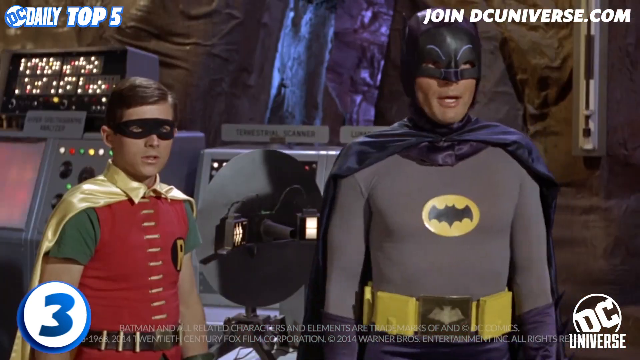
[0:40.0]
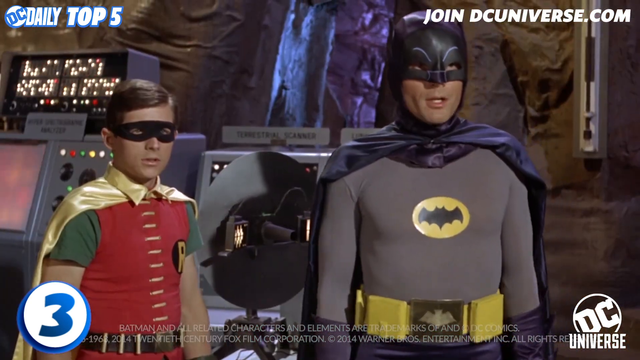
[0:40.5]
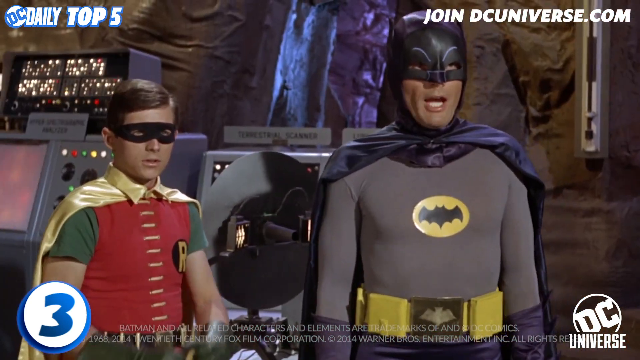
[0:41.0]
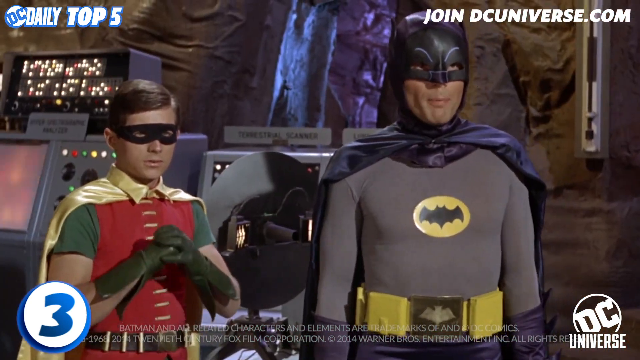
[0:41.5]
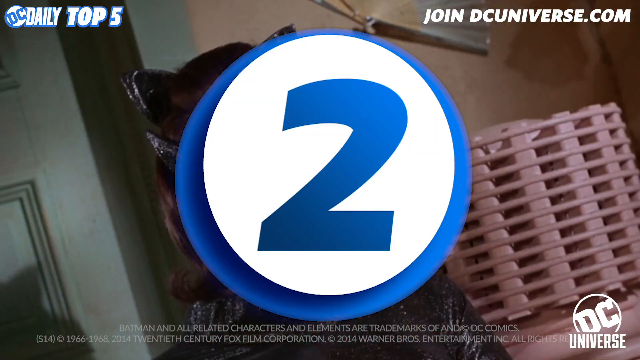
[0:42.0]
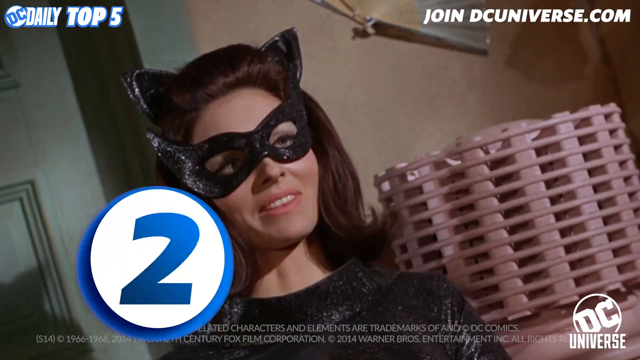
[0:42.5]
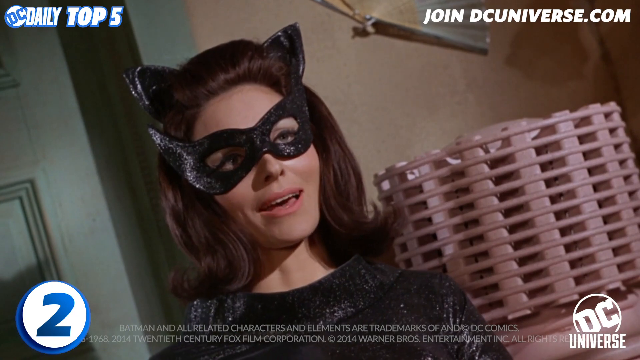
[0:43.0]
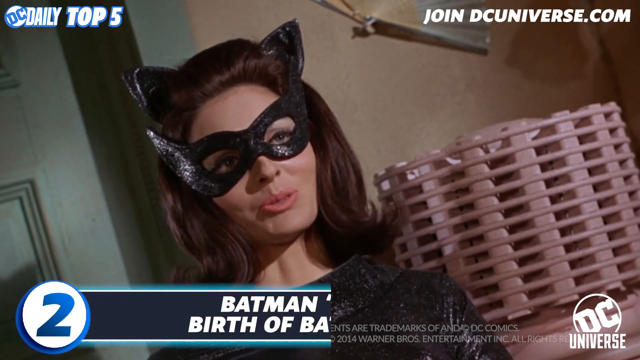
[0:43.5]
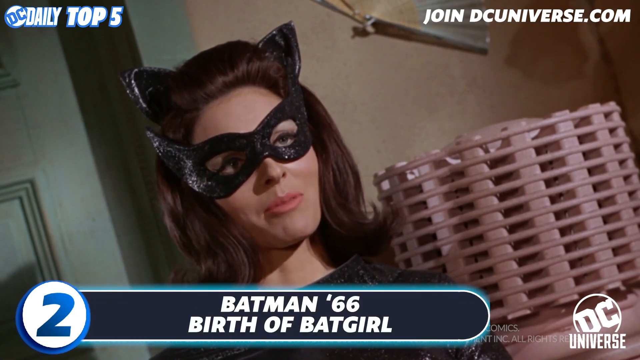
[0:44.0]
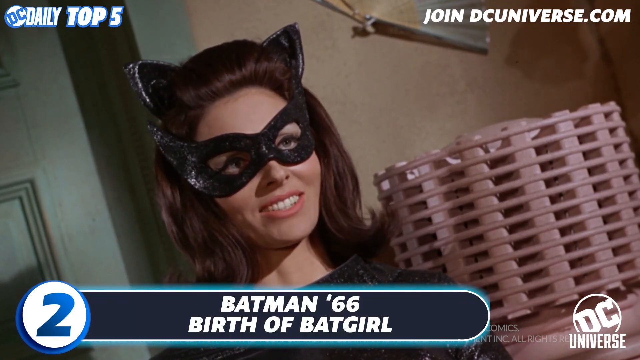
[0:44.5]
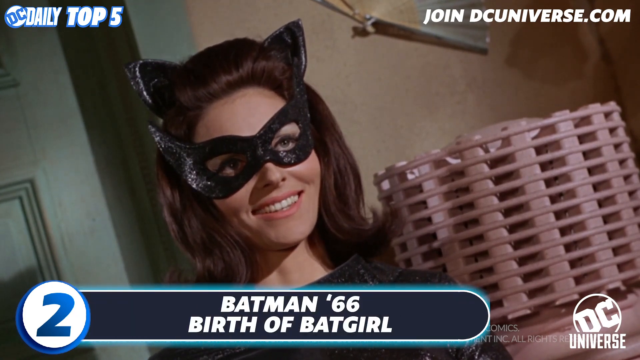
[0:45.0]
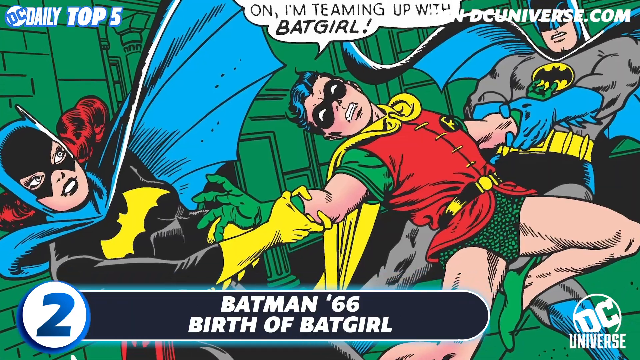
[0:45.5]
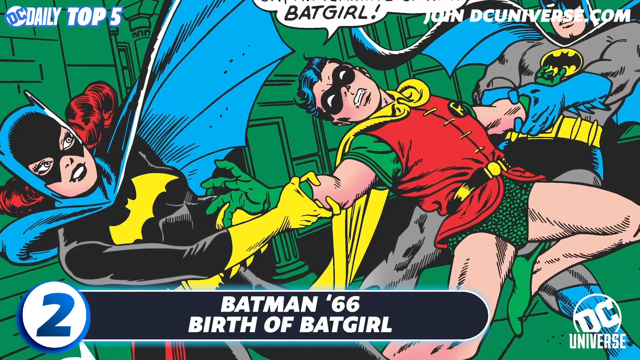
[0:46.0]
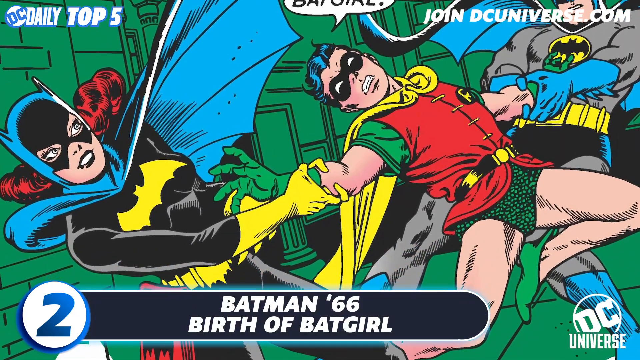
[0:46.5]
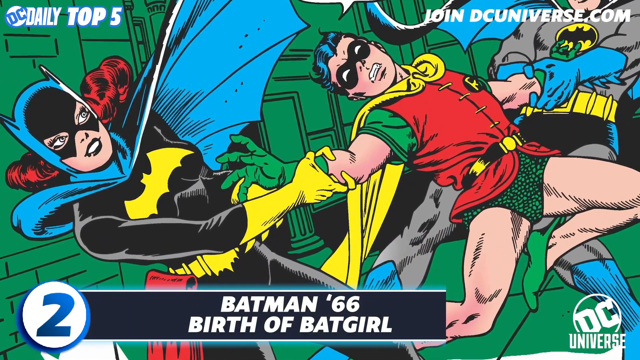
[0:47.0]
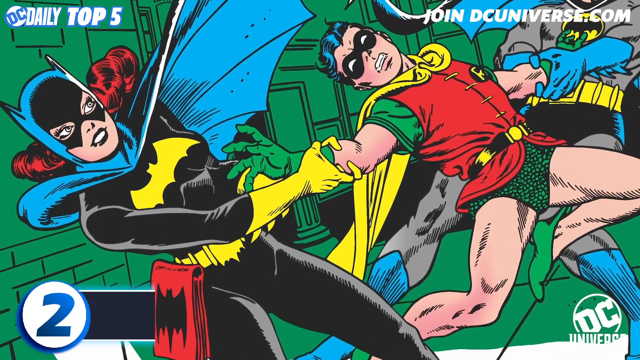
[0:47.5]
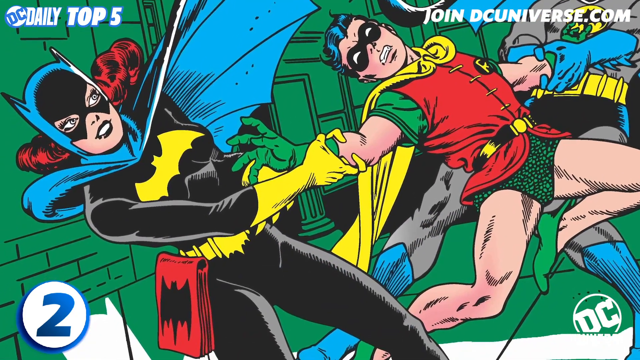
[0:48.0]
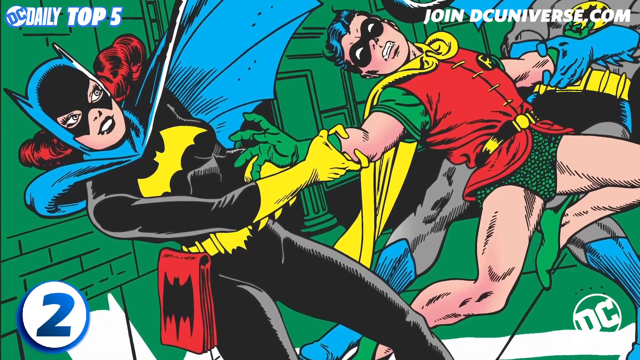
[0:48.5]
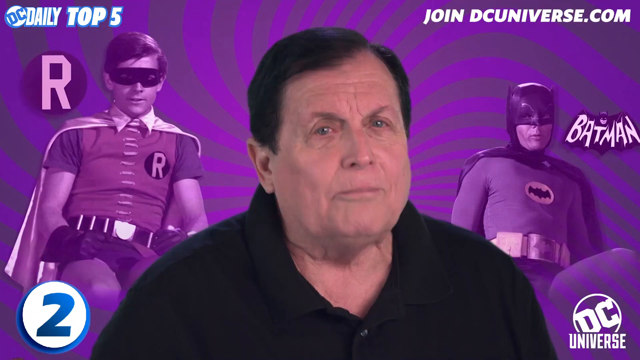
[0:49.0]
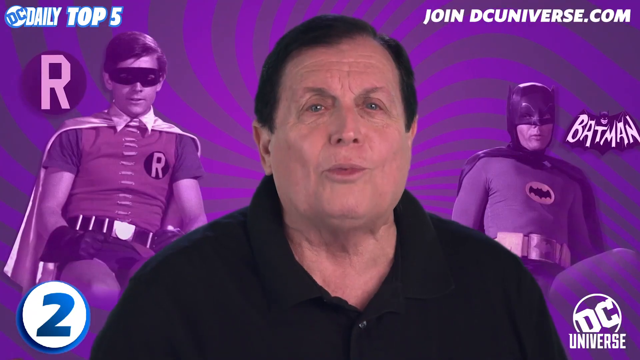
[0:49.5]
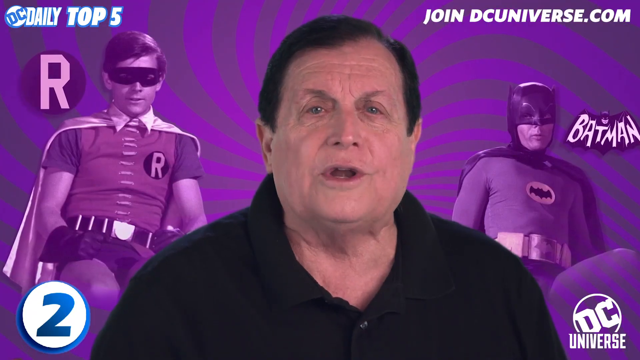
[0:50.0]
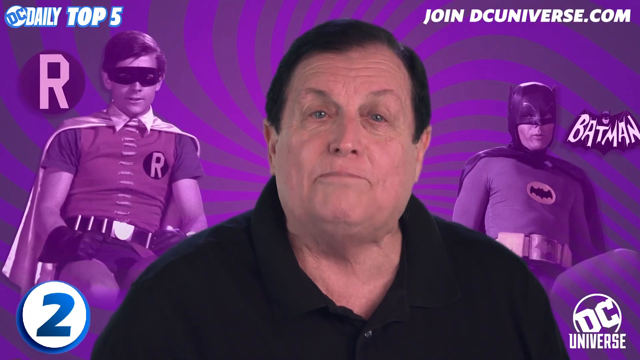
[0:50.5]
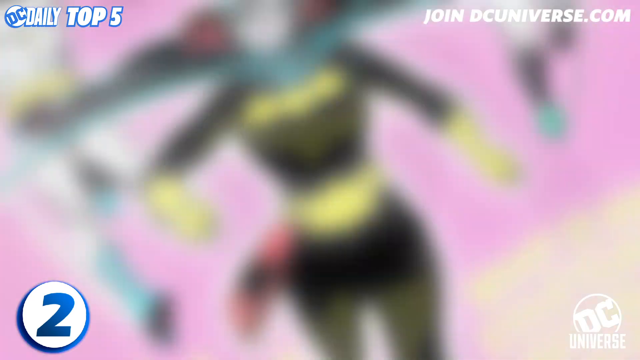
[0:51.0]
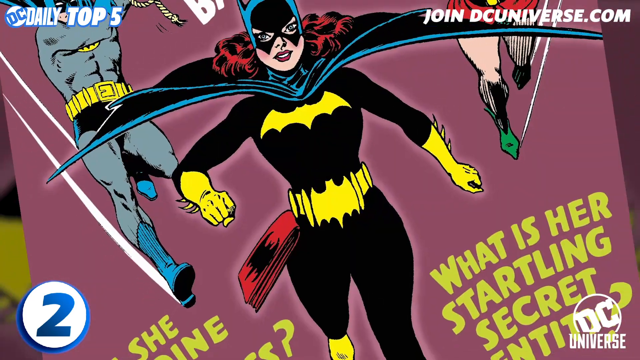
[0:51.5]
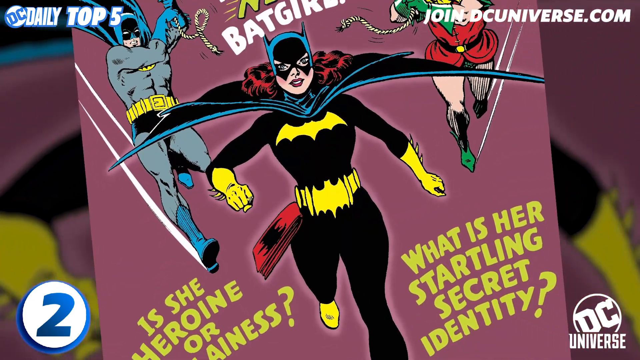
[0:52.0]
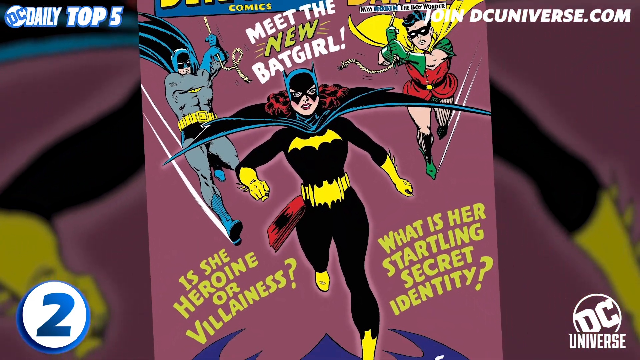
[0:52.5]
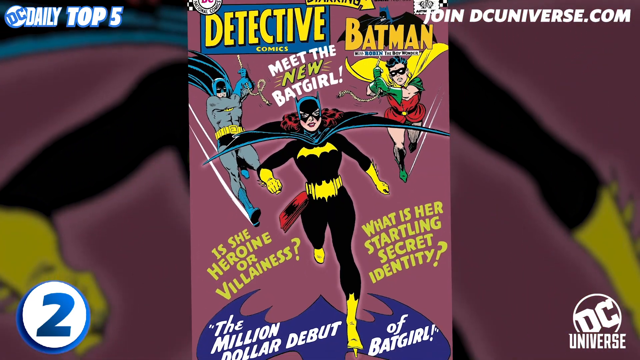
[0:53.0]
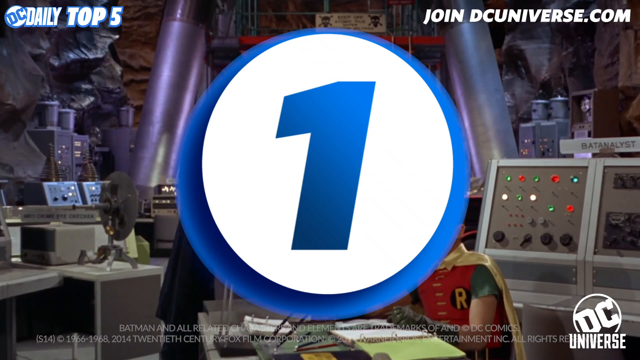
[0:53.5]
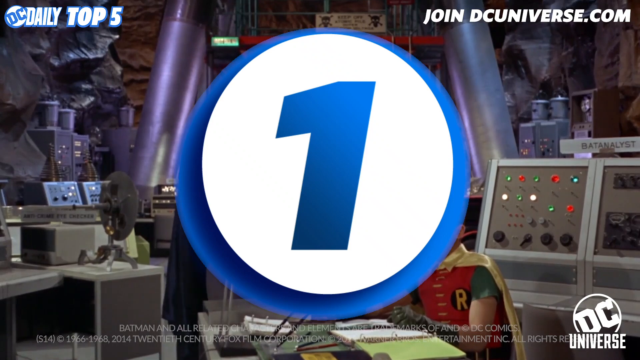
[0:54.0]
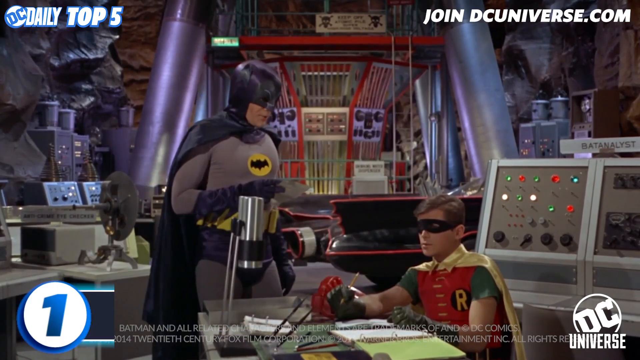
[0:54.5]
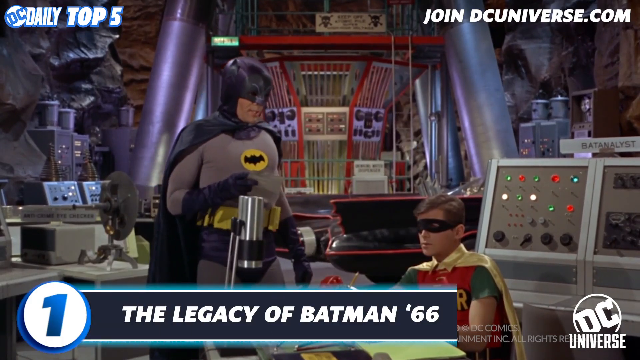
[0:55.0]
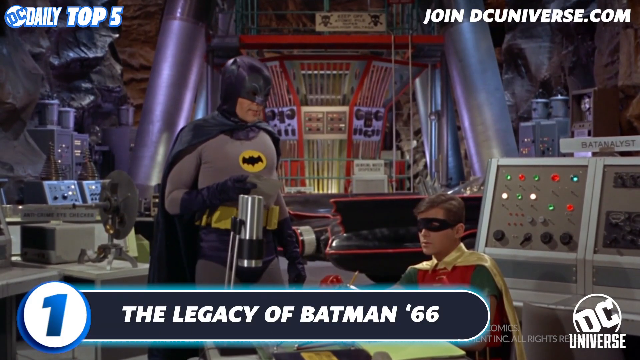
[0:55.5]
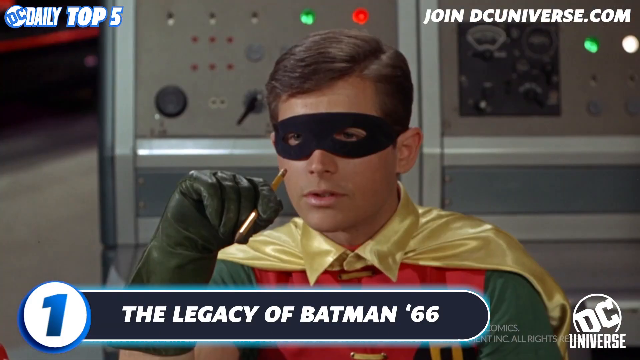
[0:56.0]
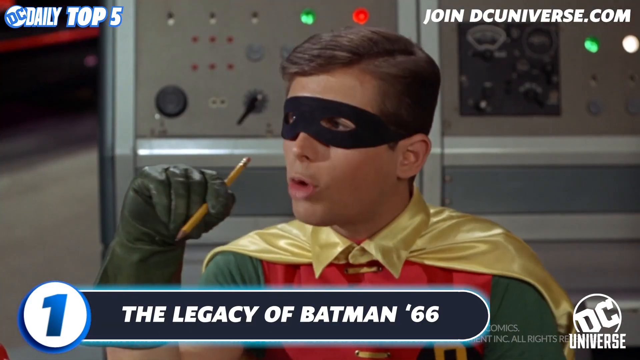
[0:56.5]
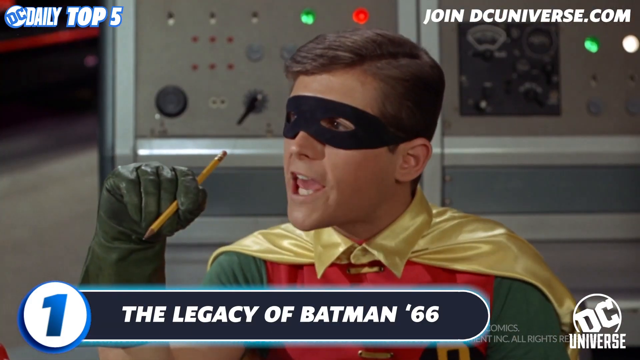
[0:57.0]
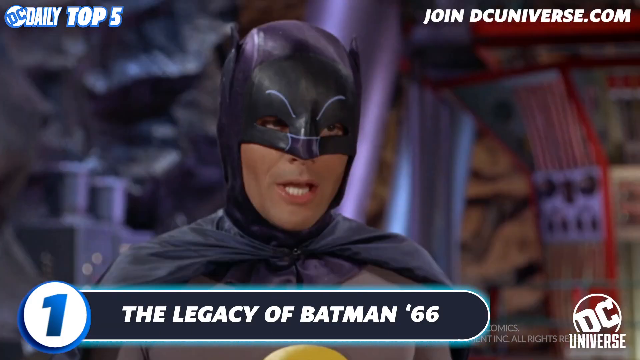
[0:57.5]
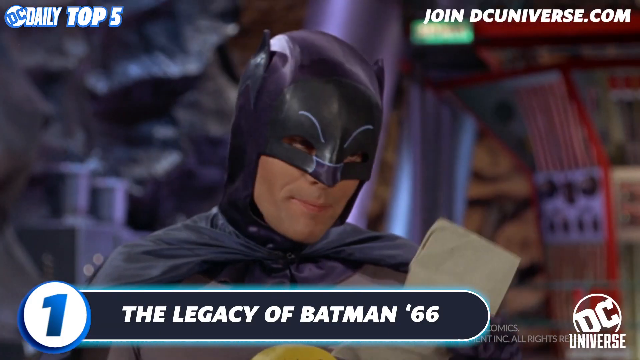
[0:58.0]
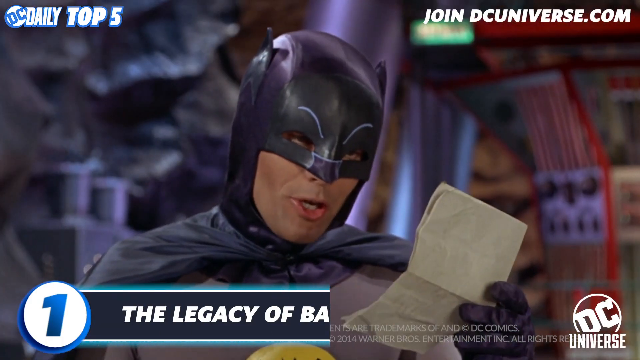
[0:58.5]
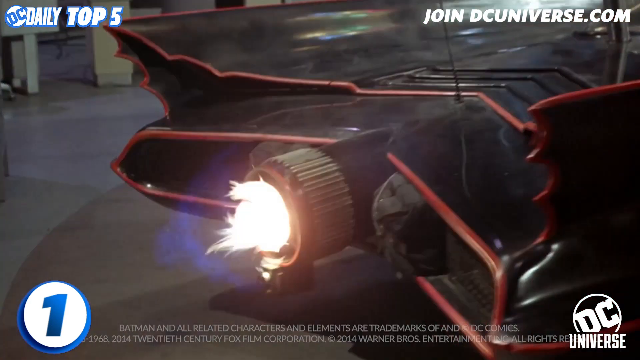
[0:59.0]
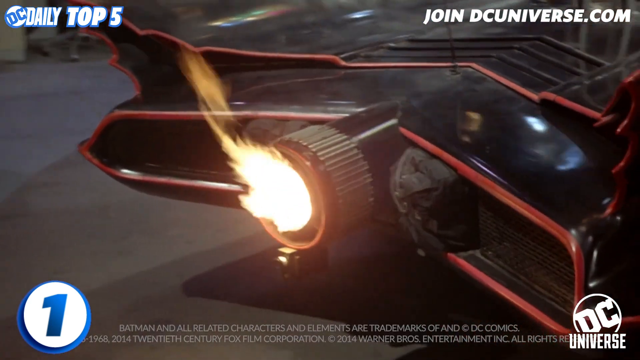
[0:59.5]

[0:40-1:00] In the Batcave, Batman is on the right talking while Robin, on the left, rubs his hands together as if ready to fight. A big blue number two appears on a white background with a blue border and moves down to the bottom left corner. A shot of Catwoman follows, filmed at a Dutch angle so the top of her head points up and to the left; she has long brown hair, black ears, a black mask and black clothes. Out from the two in the bottom left, text reads "Batman 66, birth of Batgirl" while she talks. A comic image shows Batgirl on the left, Robin in the center and Batman on the right; Batgirl and Batman are both pulling Robin's arms, and Robin is kind of leaning back with his arms stretched out, looking like he is in pain. The video cuts back to Burt Ward talking in a close shot from the shoulders up. Another comic pans out, with Batgirl in the center, Batman in the top left and Robin in the top right, swinging in on ropes. Number one shows up in the center and moves down to the bottom left, with text reading "the legacy of Batman 66." Inside the Batcave, with computers around, Batman stands just left of center looking down at Robin, who is sitting on the right side. The video cuts to Robin holding a pencil in his right hand up by his face; he looks over to the left, talking to Batman, and the camera zooms in on Batman, who has a piece of paper. A shot of the Batmobile follows, with flame shooting out of its tail end.